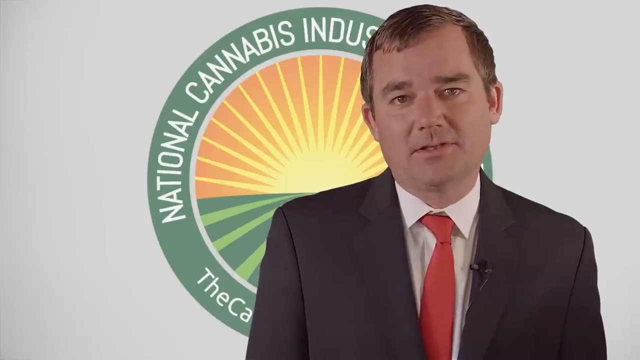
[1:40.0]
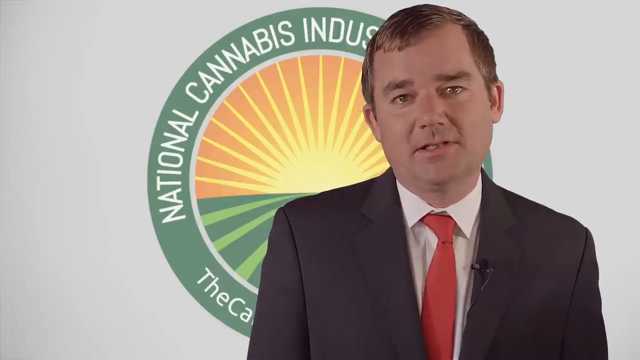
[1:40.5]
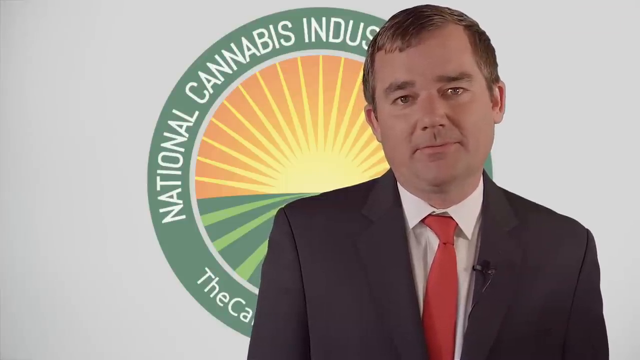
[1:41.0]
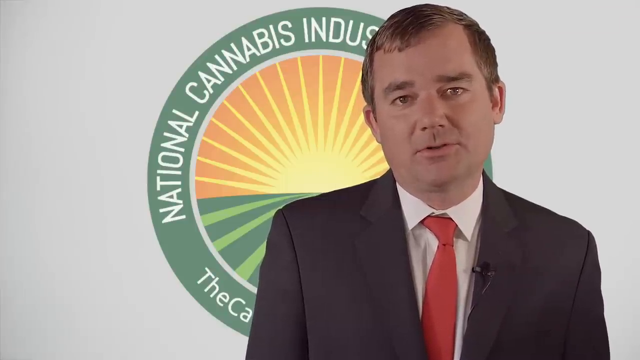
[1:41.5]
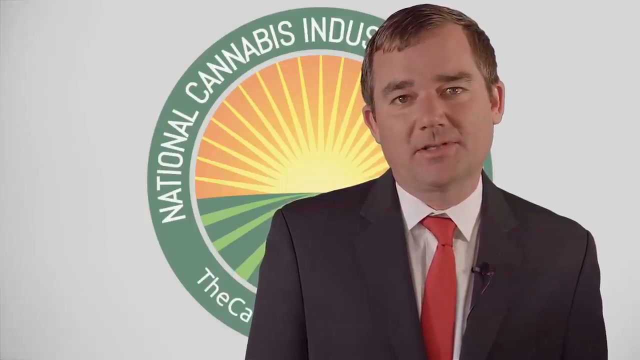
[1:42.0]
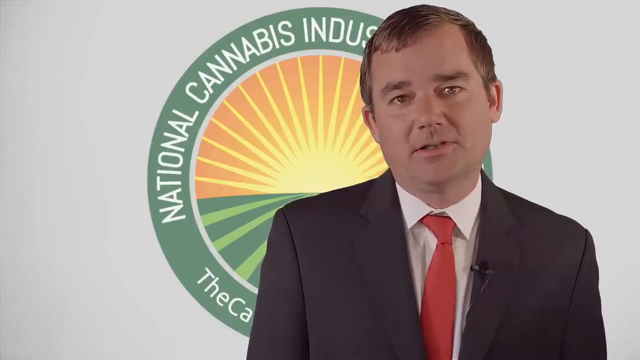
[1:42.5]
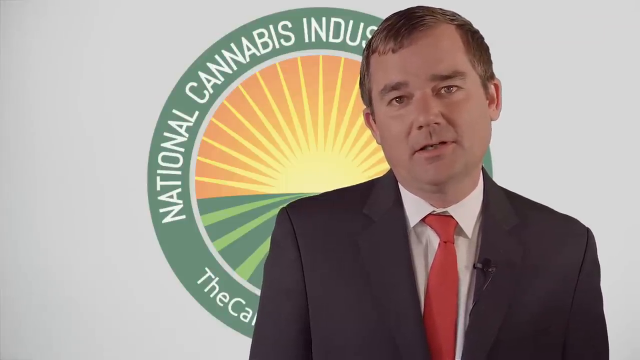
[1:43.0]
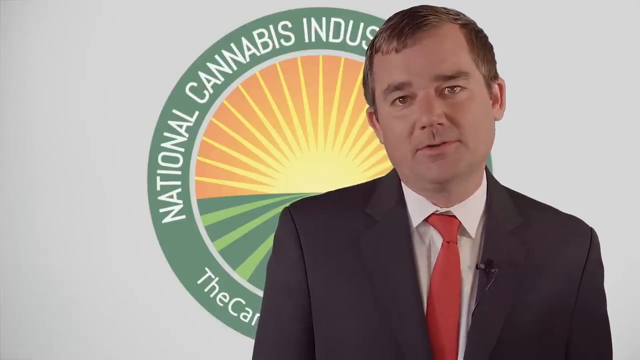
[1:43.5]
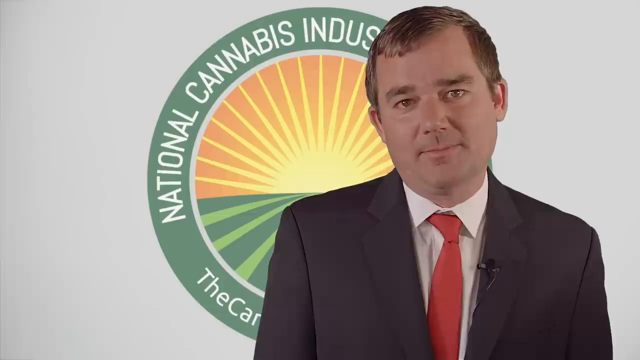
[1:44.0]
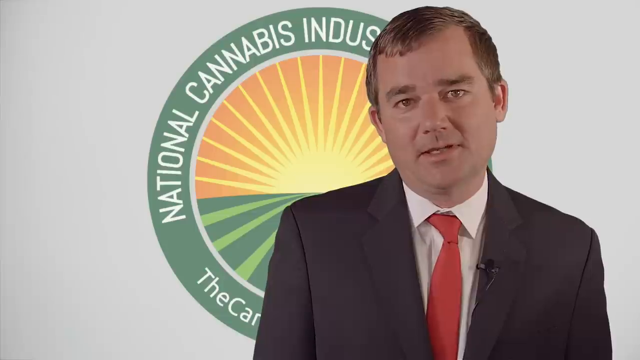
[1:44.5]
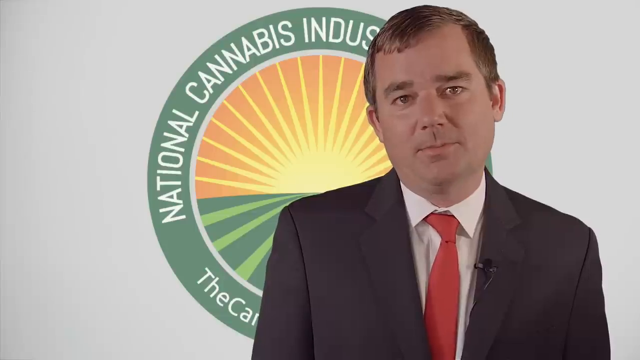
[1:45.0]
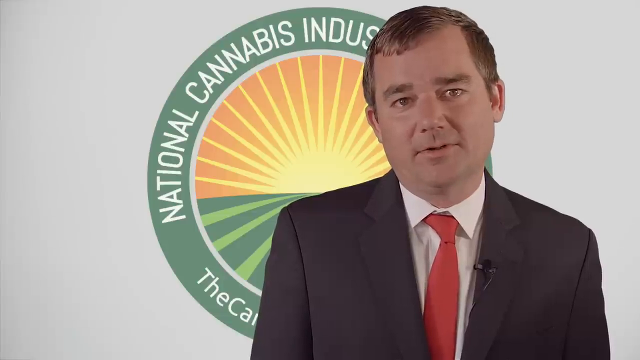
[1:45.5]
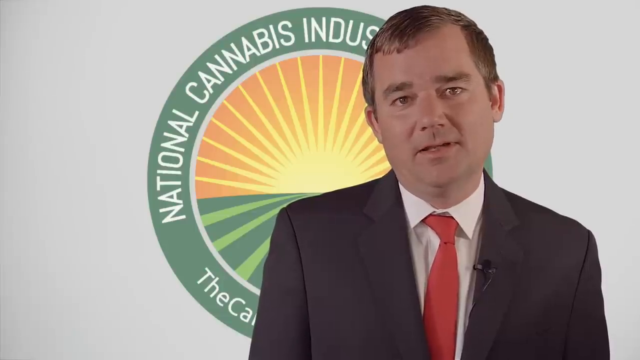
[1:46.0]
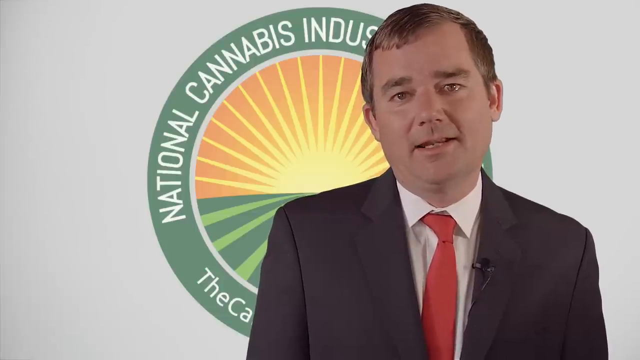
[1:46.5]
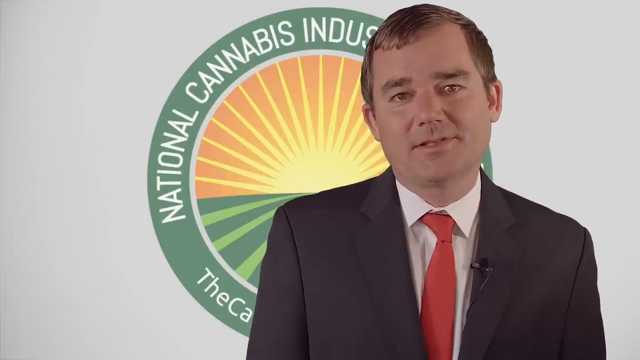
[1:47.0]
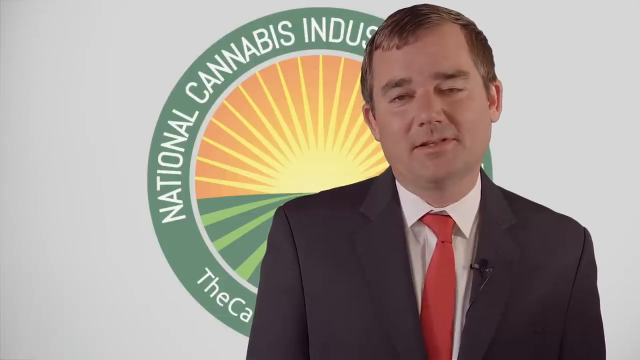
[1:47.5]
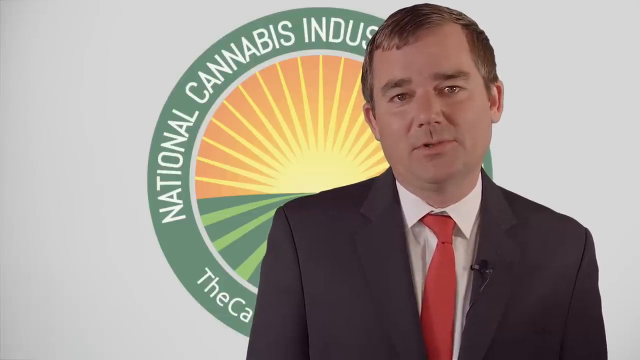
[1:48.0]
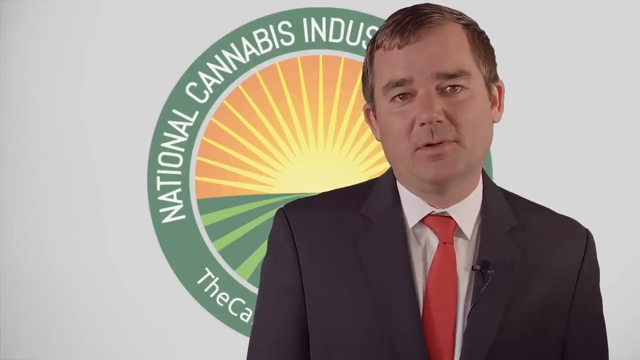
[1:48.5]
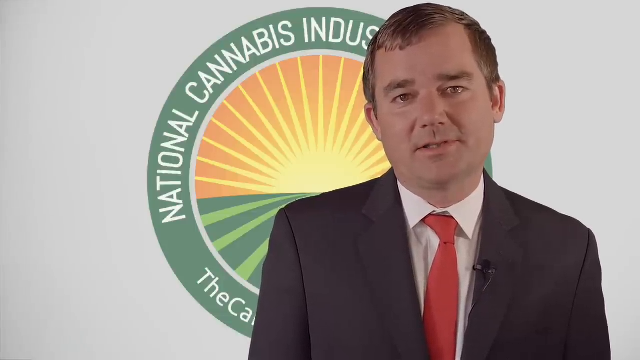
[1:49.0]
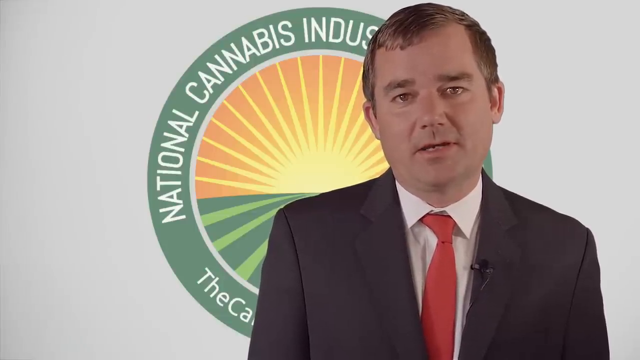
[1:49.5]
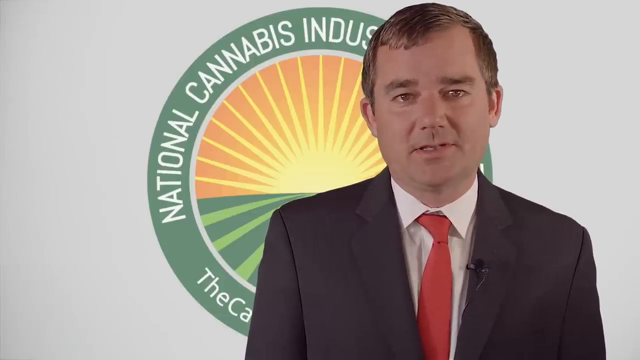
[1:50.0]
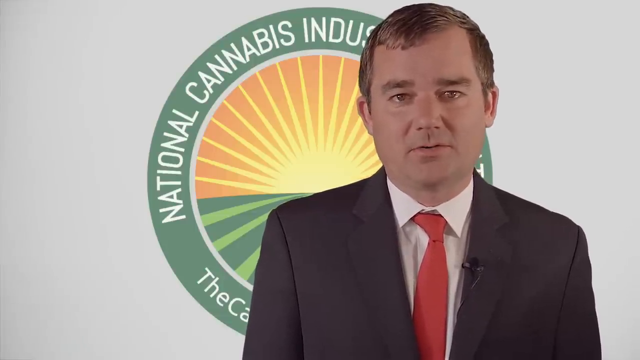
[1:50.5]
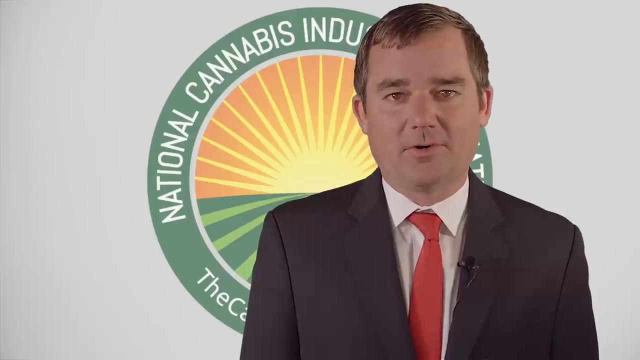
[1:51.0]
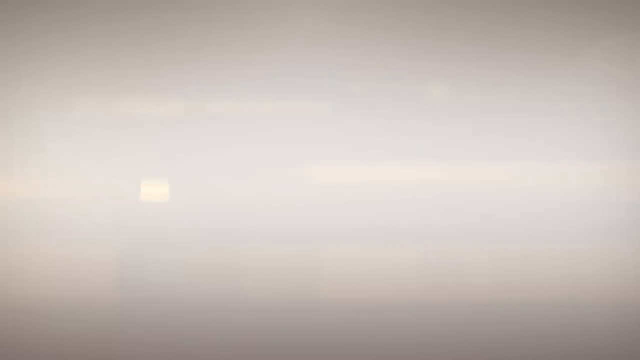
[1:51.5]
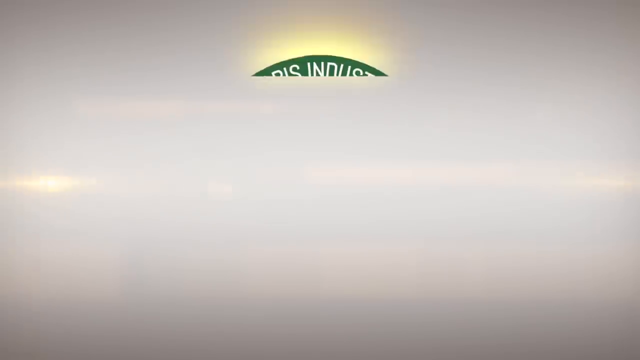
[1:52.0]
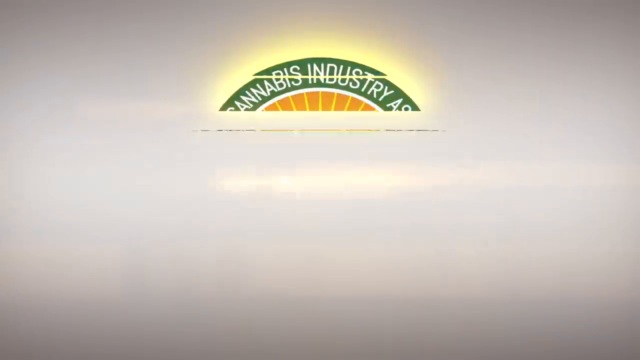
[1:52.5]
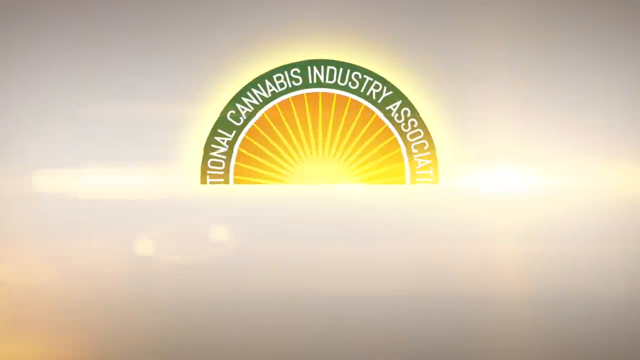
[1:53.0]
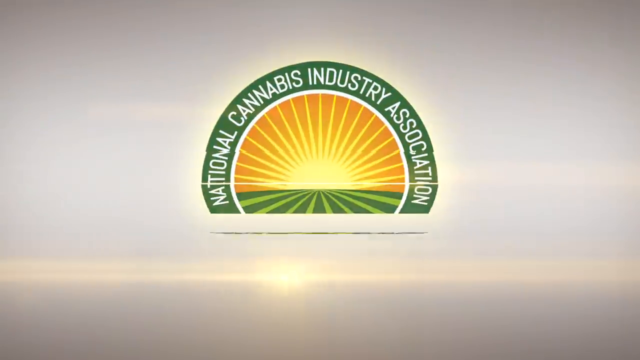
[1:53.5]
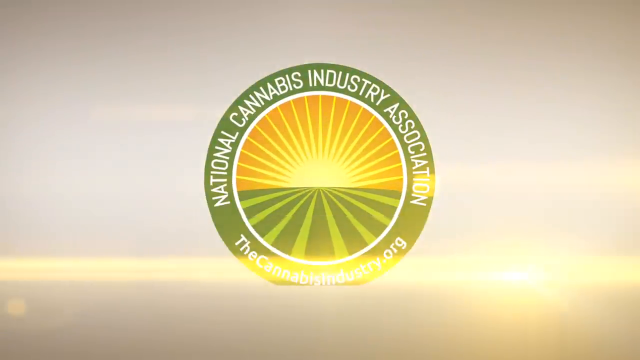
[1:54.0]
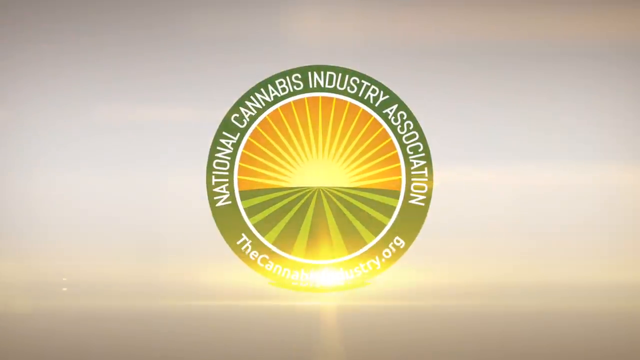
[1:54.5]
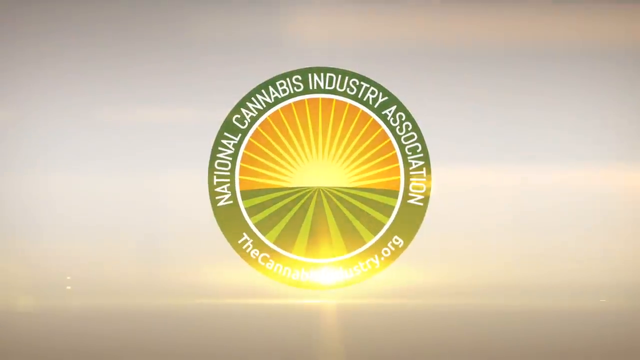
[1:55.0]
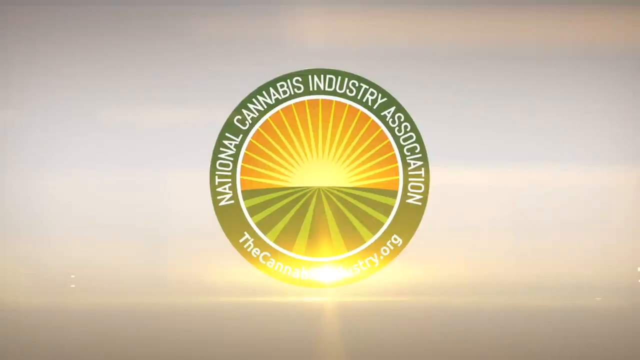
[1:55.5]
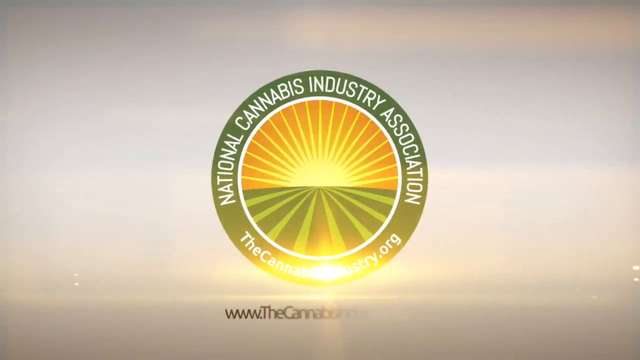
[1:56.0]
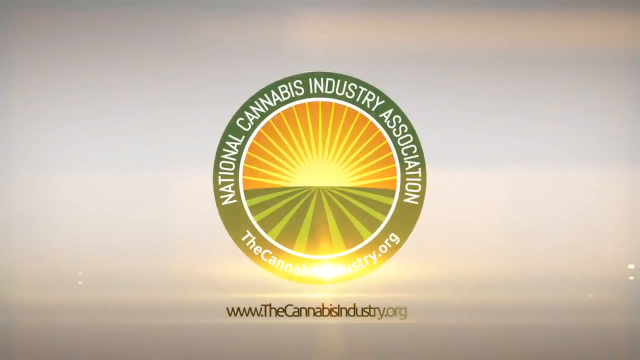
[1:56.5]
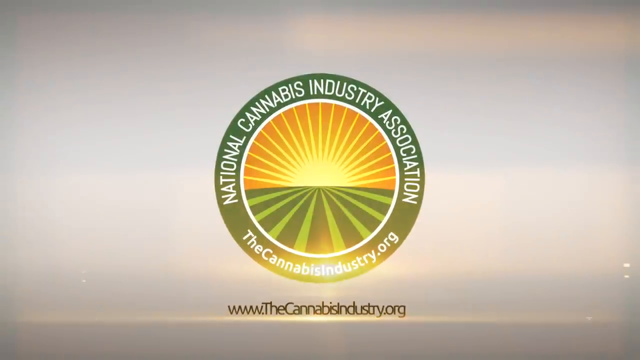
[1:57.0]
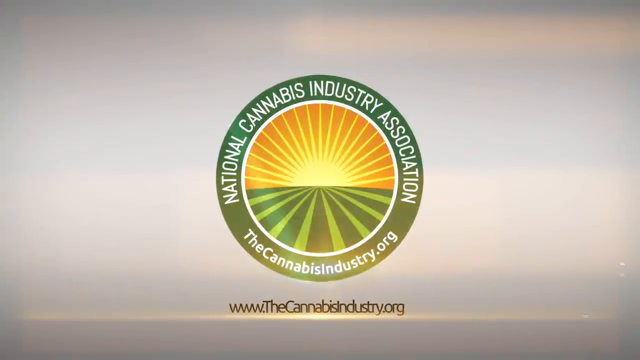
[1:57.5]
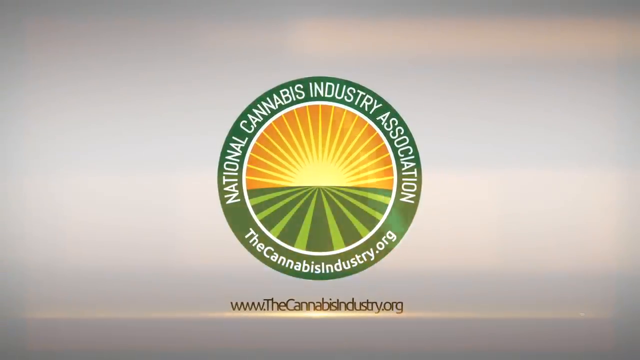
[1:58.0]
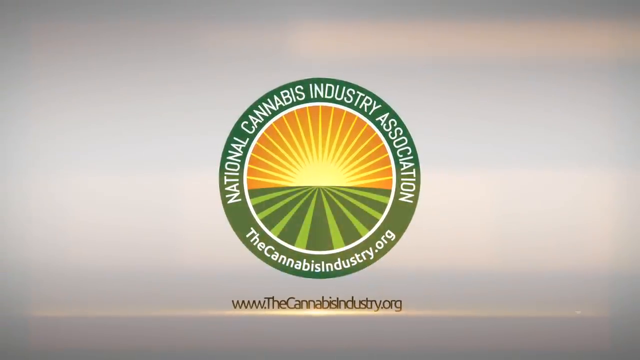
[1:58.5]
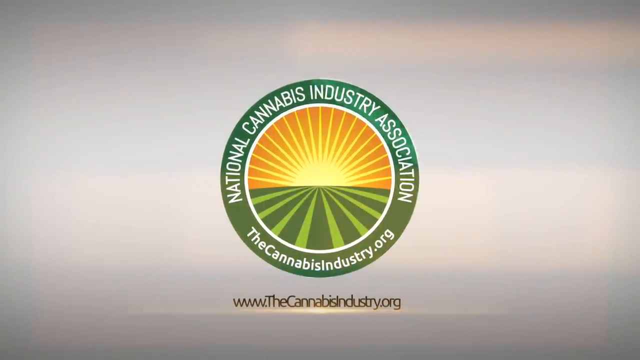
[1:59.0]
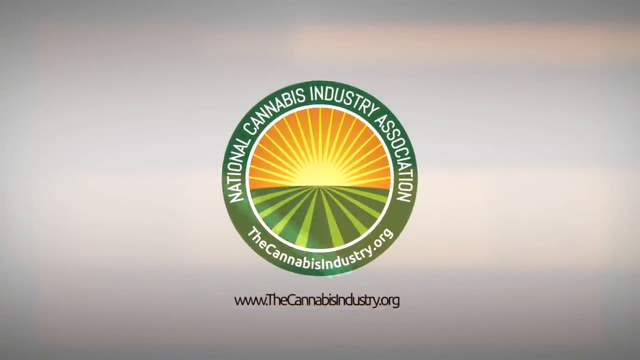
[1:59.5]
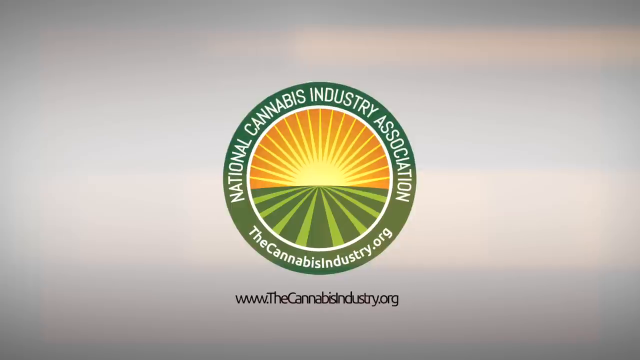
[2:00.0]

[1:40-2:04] The executive director of the National Cannabis Industry Association continues talking, with not much happening on the screen. The National Cannabis Industry Association logo then appears on the screen with an effect. It is a green logo made of two or three circles. The innermost circle contains orange along with green and light green stripes; the orange mimics the sun, while the dark green and light green stripes possibly mimic a farm or garden and also mimic the sign for cannabis. The words "National Cannabis Industry Association" are enveloped in a larger circle around it. Below is written "www.thecannabisindustry.org". This is the end screen of the video, and a black screen then appears for a few seconds.